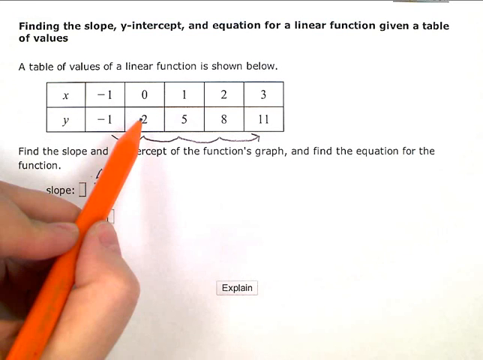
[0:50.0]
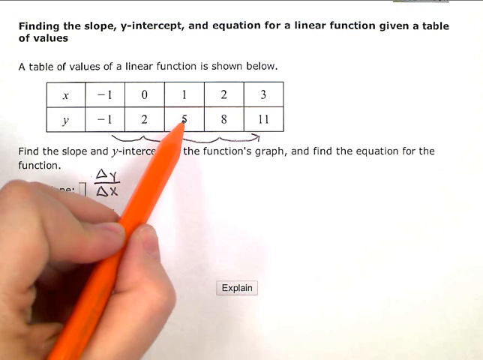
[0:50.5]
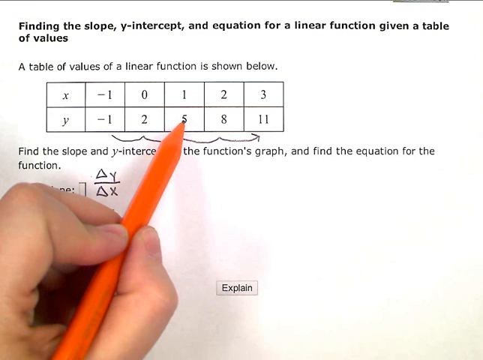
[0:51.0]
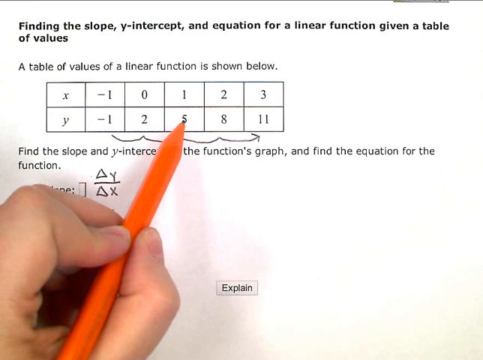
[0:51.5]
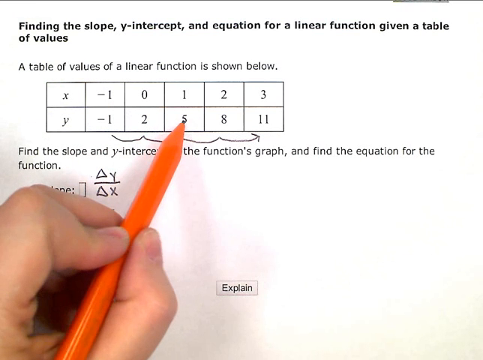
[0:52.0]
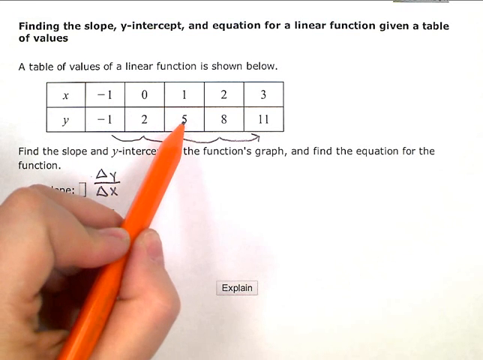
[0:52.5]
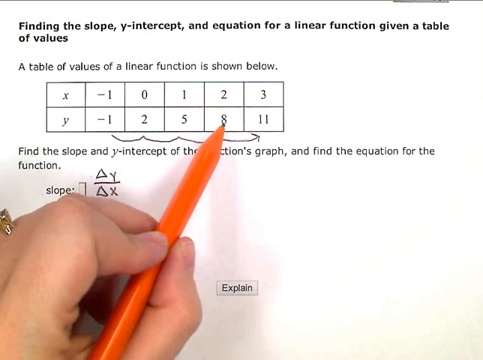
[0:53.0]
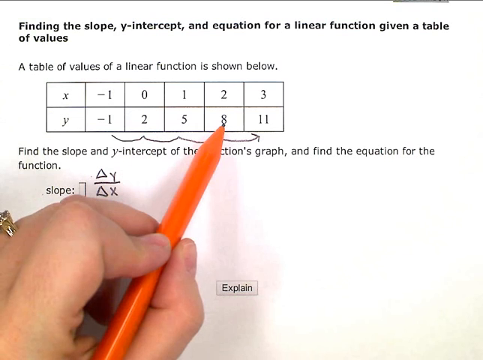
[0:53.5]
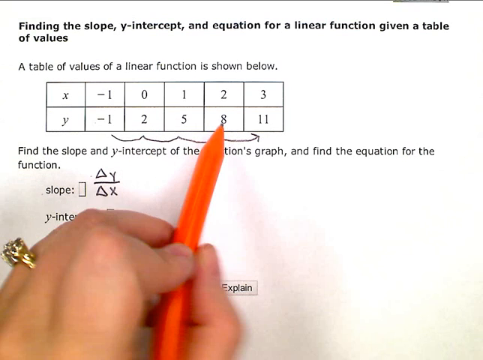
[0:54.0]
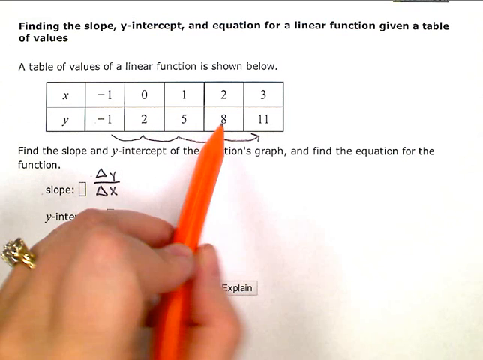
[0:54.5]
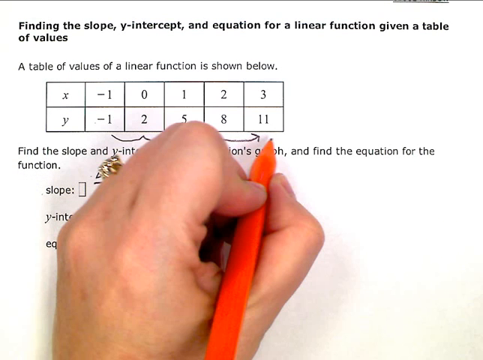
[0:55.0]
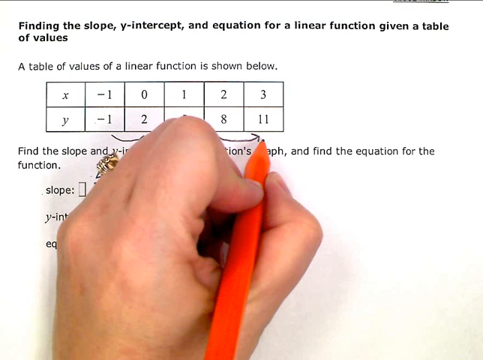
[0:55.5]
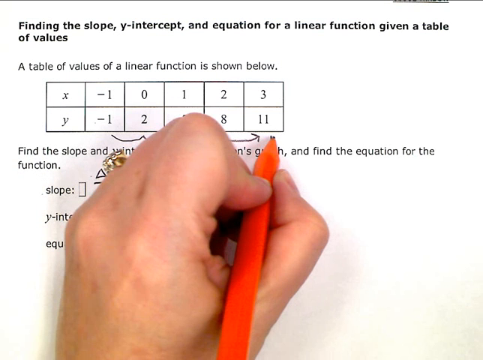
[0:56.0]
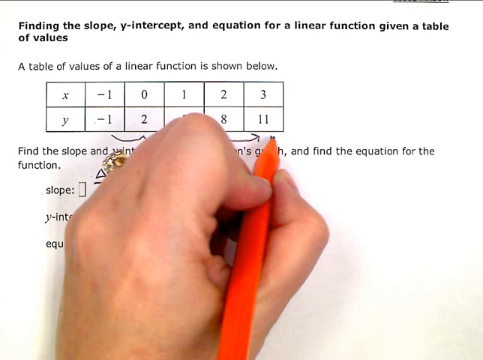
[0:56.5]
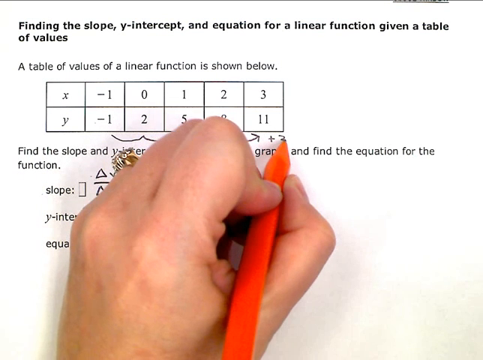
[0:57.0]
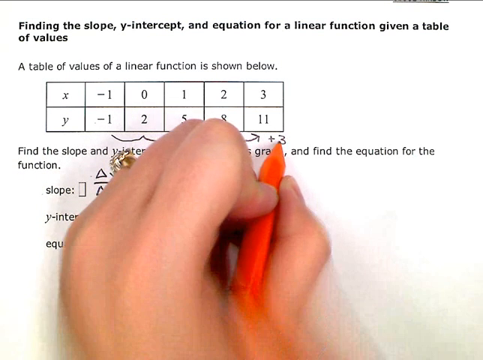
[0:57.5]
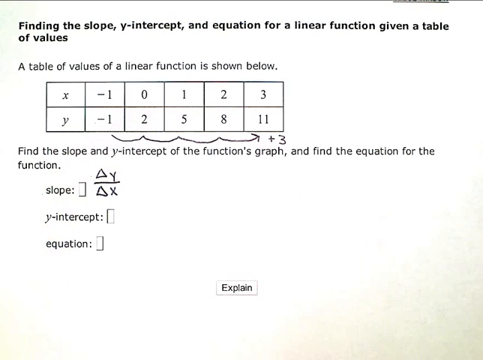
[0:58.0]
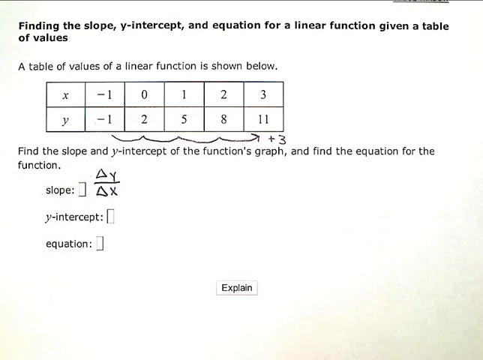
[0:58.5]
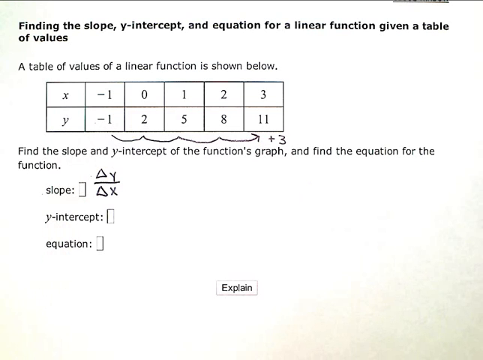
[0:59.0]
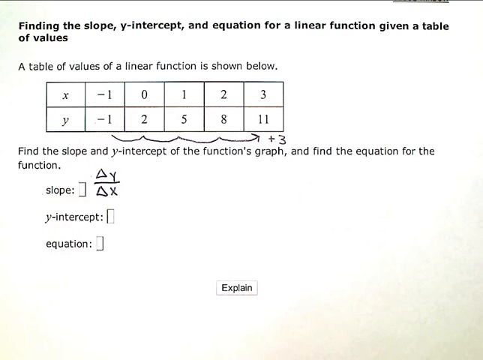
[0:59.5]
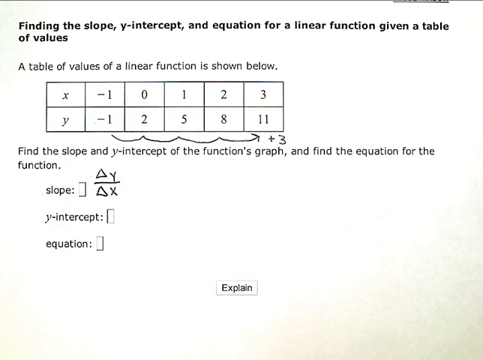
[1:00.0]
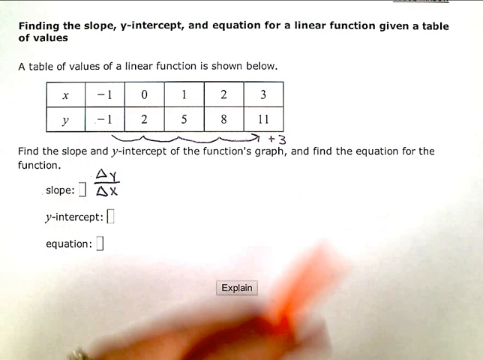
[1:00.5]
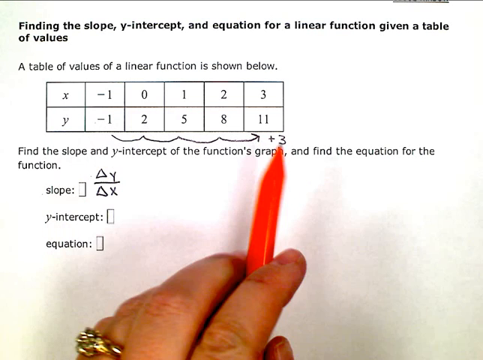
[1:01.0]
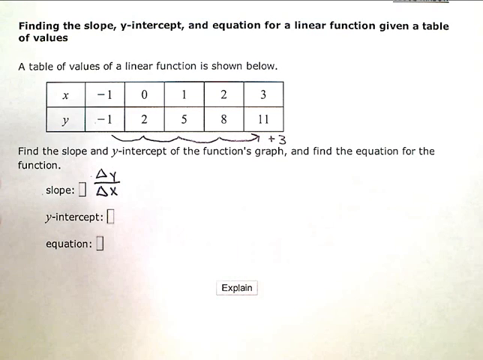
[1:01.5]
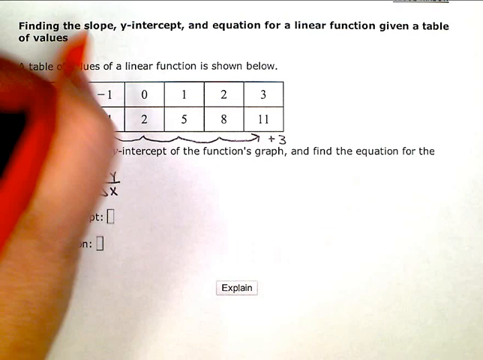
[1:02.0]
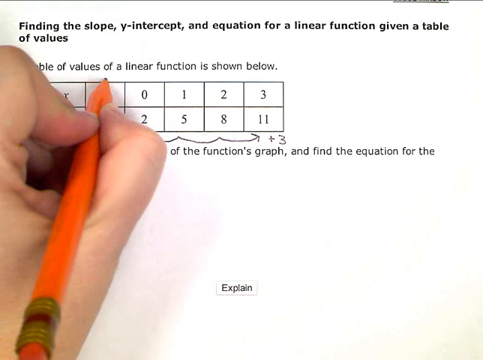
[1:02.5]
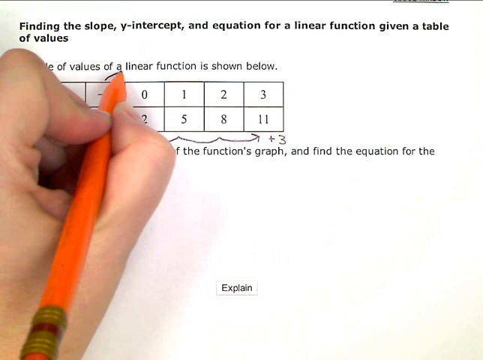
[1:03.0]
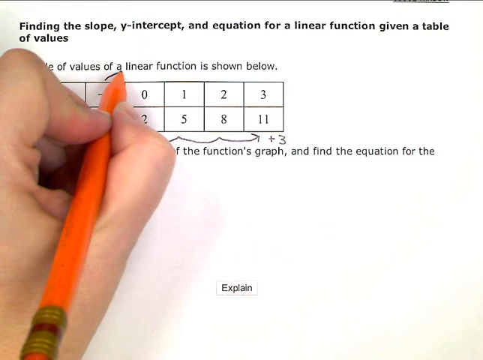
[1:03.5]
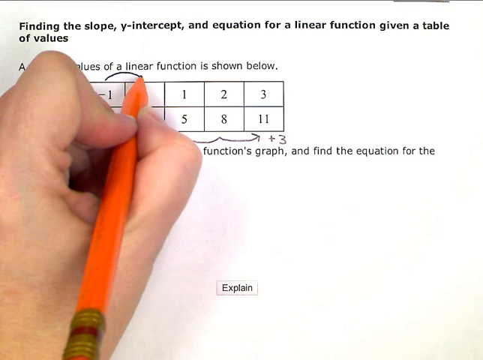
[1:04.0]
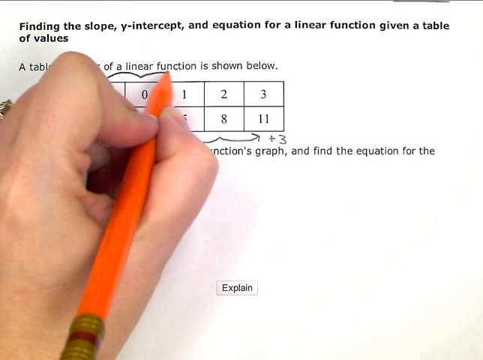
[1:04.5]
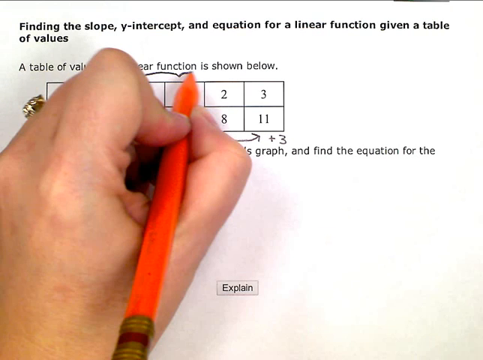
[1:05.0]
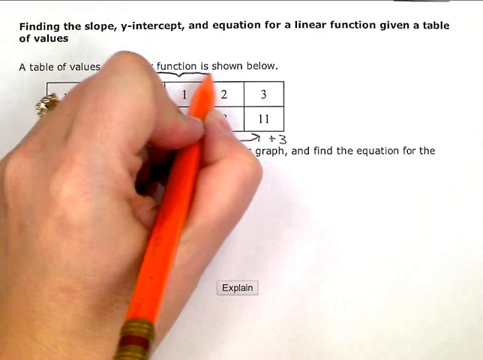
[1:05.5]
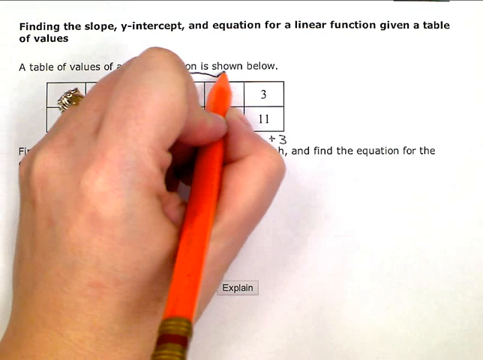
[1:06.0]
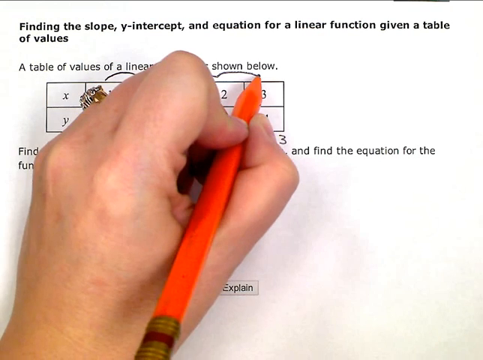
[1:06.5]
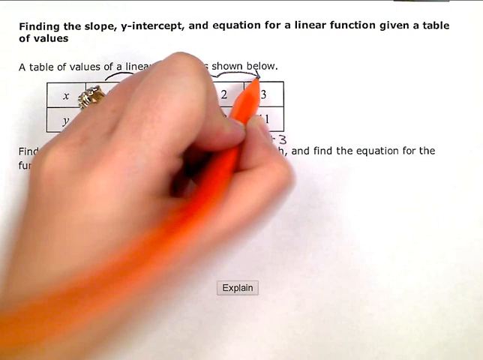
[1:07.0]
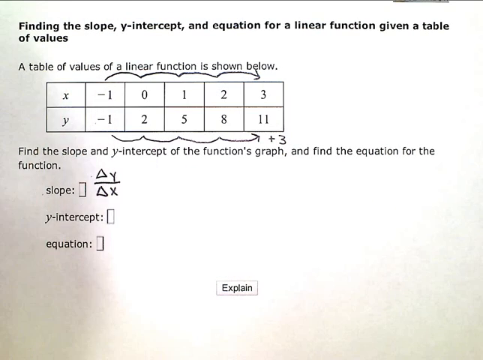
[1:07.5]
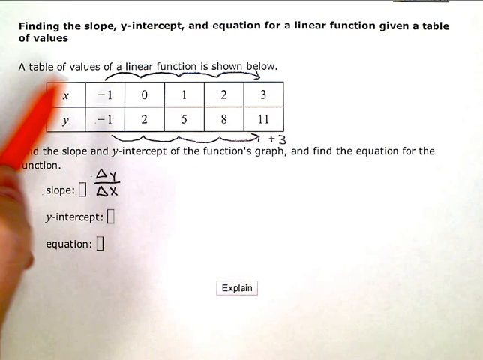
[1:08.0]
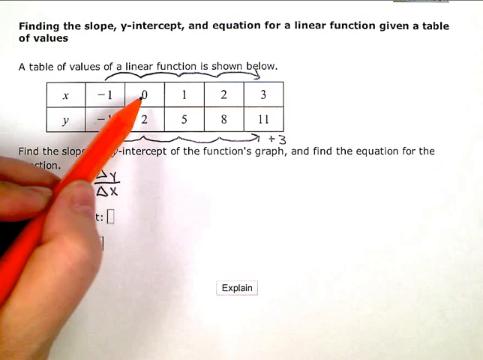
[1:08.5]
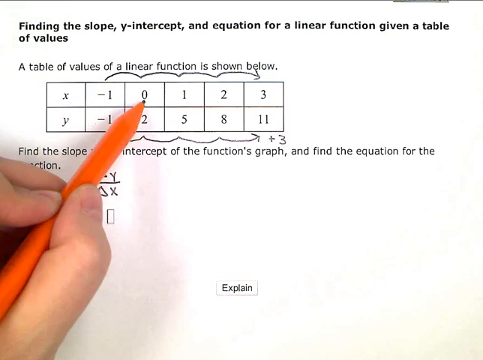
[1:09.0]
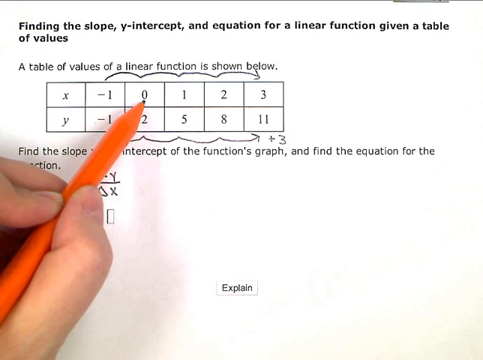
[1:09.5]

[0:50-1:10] A hand explains how the y numbers -1, 2, 5, 8 and 11 each differ by 3, while the x numbers -1, 0, 1, 2 and 3 go up by 1. The numbers are in a table under the title "find the slope, y-intercept, and equation for linear function given the table of values". Below it is the task "finding the slope and y-intercept of function graph and find the equation for the function", with slope, y-intercept and equation sections, followed by a button called explain. A man holding a red pen is describing the difference. He wears a golden ring on the second finger from the left of his left hand.